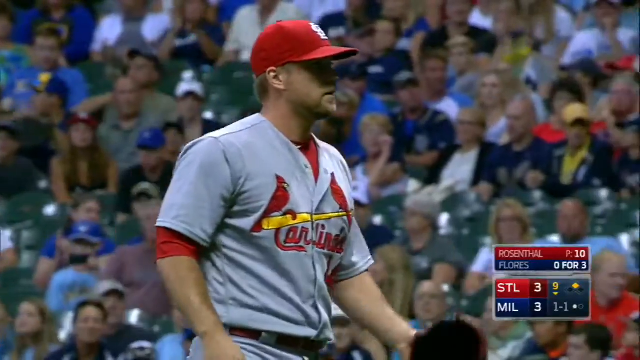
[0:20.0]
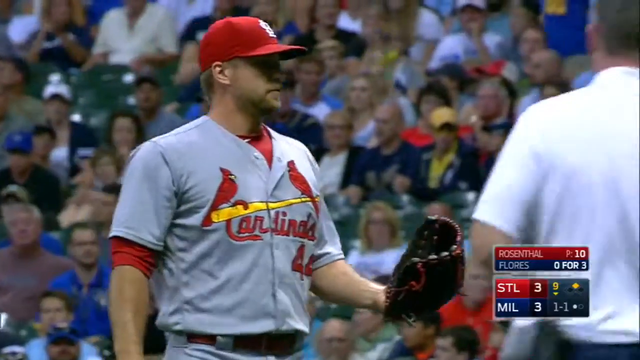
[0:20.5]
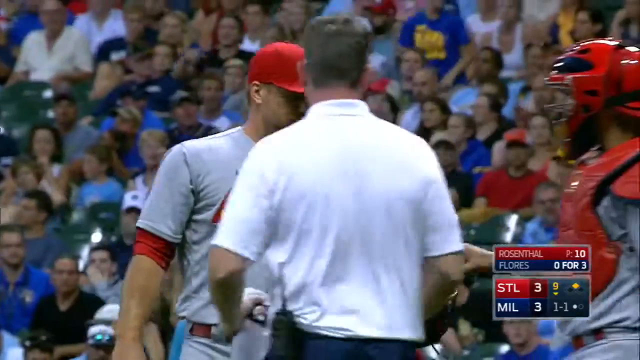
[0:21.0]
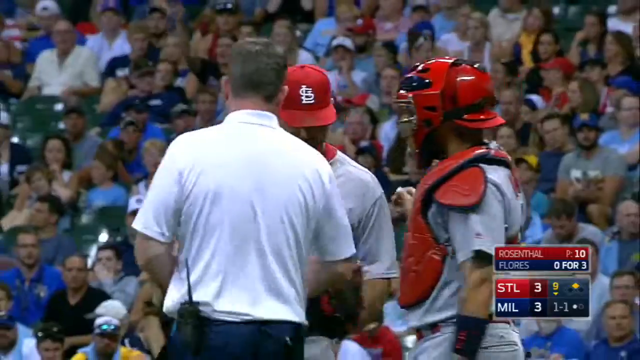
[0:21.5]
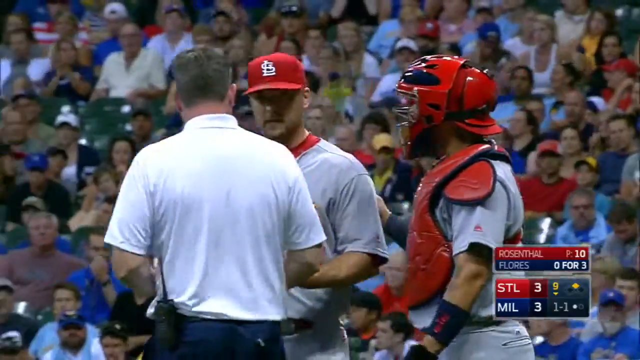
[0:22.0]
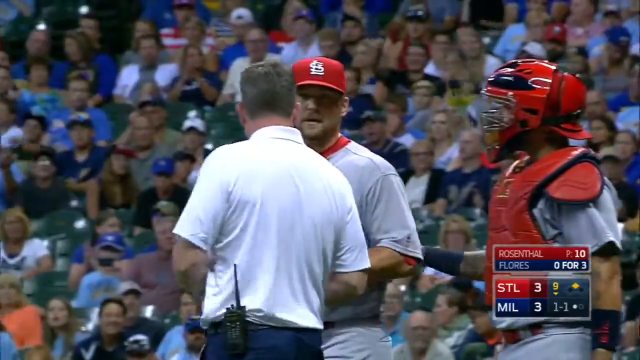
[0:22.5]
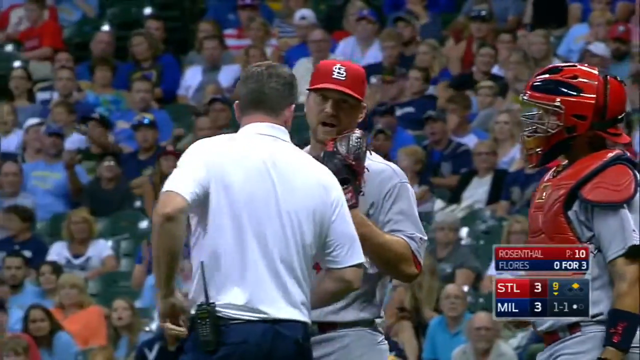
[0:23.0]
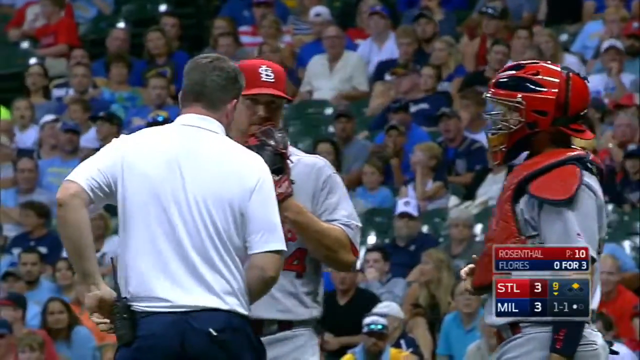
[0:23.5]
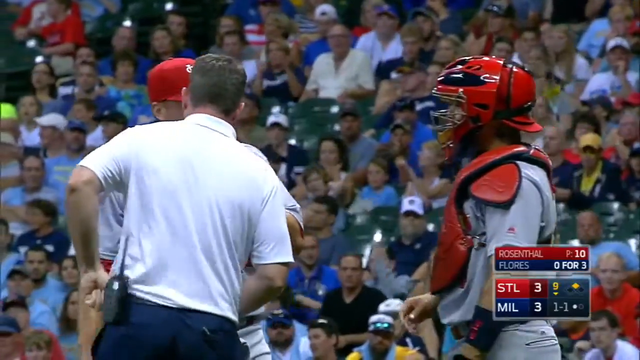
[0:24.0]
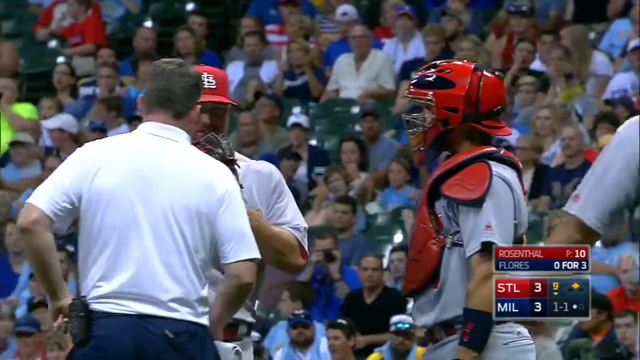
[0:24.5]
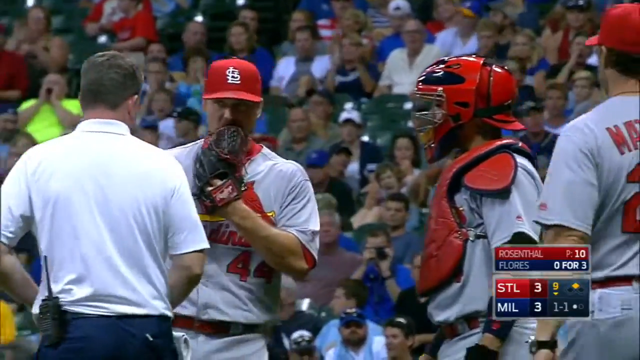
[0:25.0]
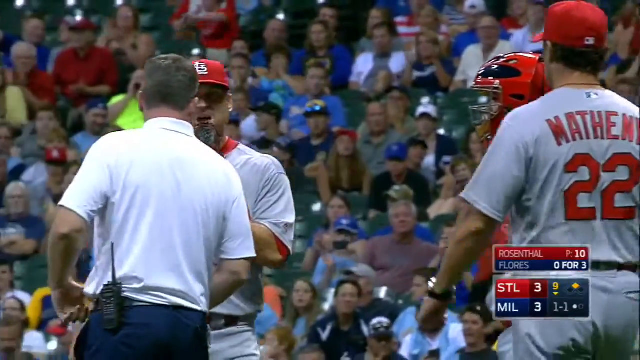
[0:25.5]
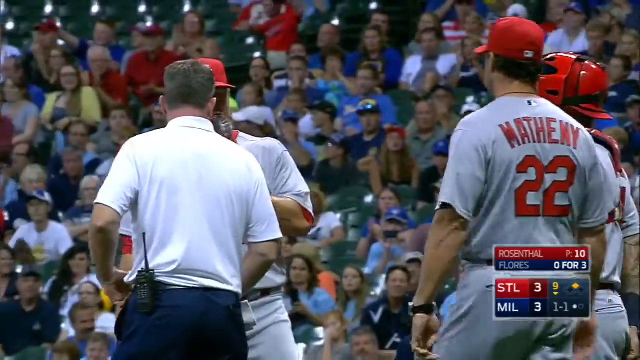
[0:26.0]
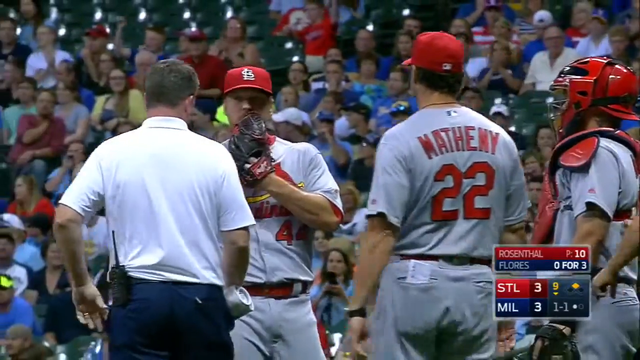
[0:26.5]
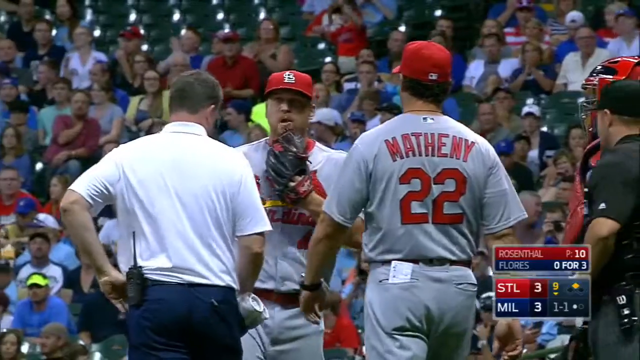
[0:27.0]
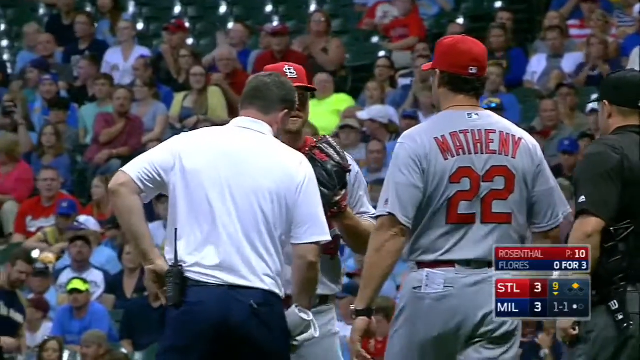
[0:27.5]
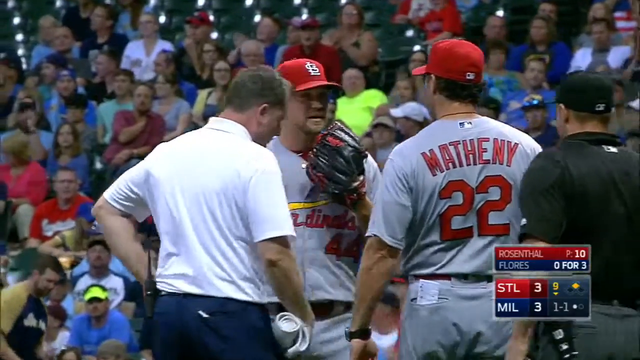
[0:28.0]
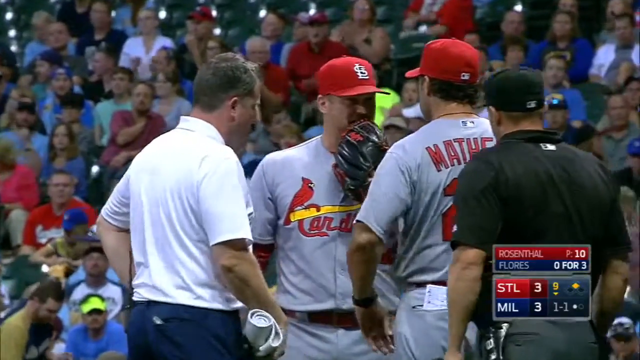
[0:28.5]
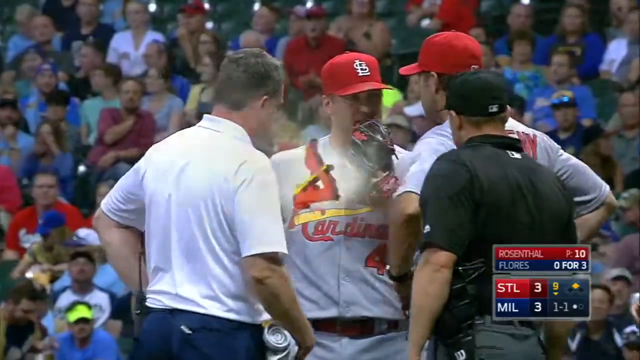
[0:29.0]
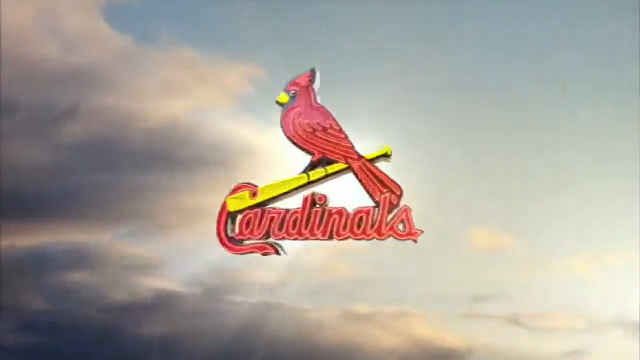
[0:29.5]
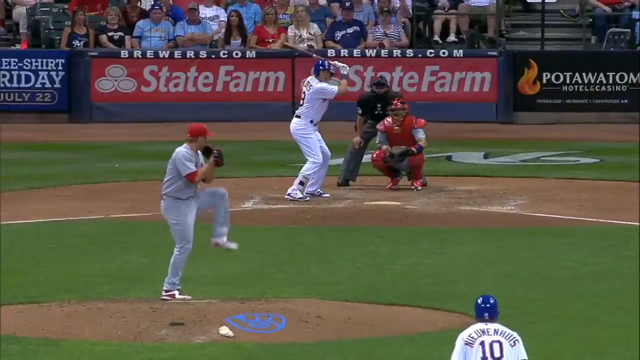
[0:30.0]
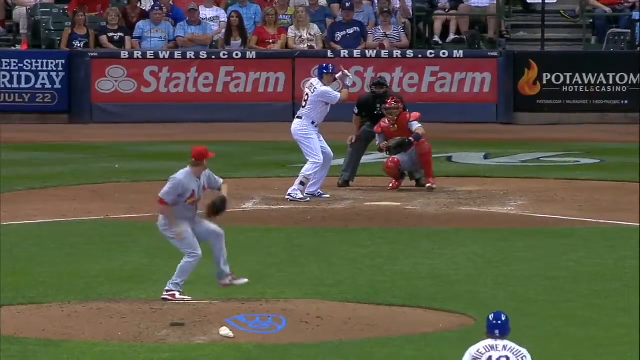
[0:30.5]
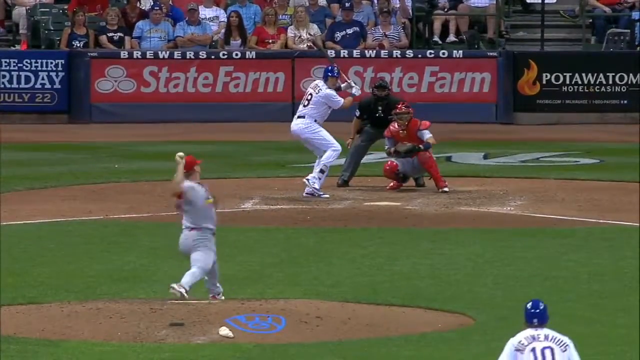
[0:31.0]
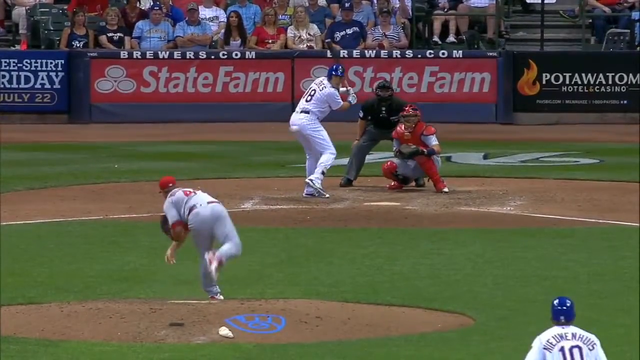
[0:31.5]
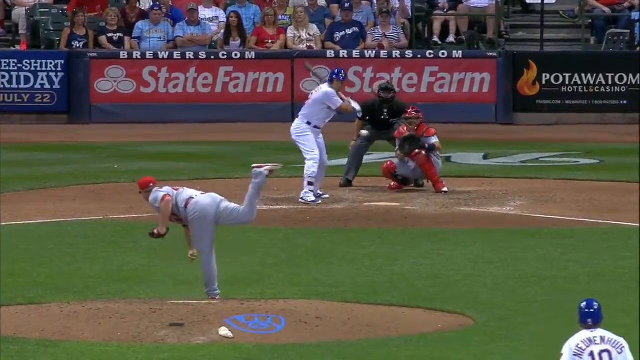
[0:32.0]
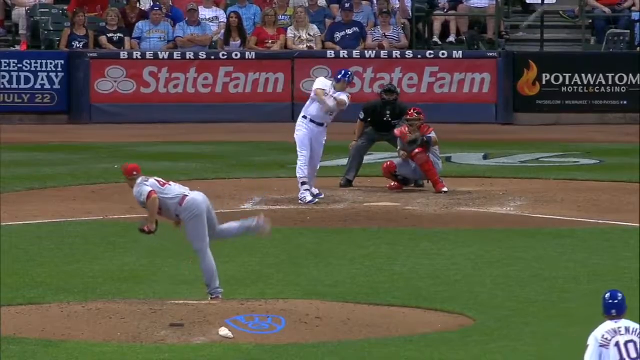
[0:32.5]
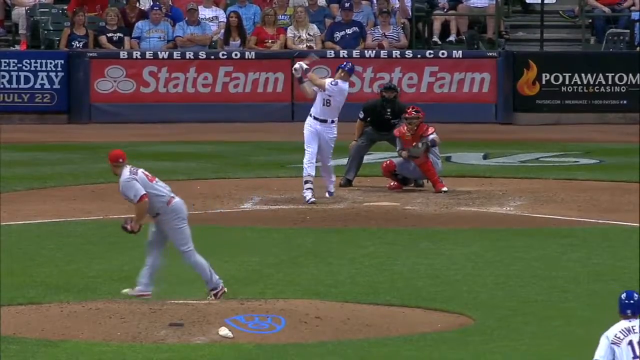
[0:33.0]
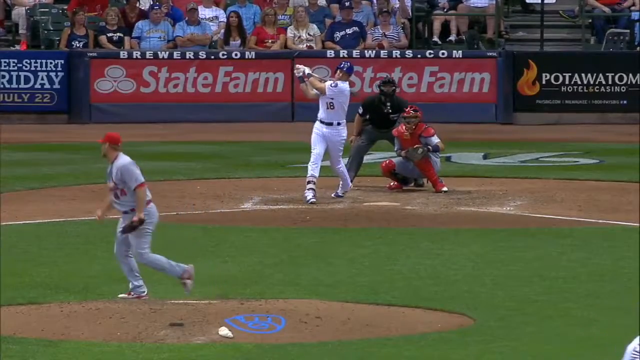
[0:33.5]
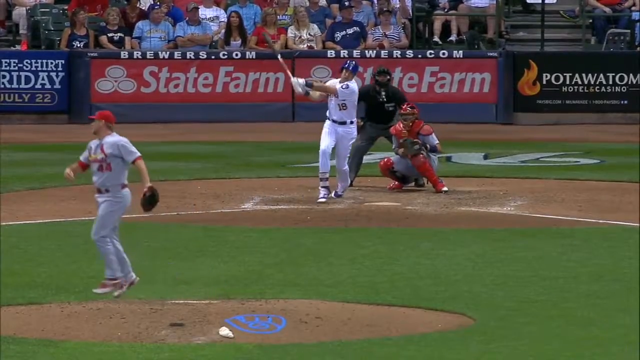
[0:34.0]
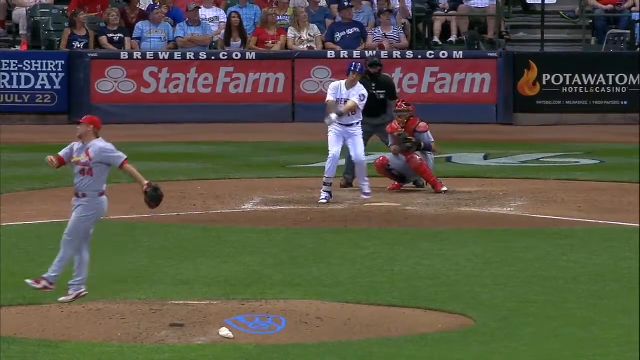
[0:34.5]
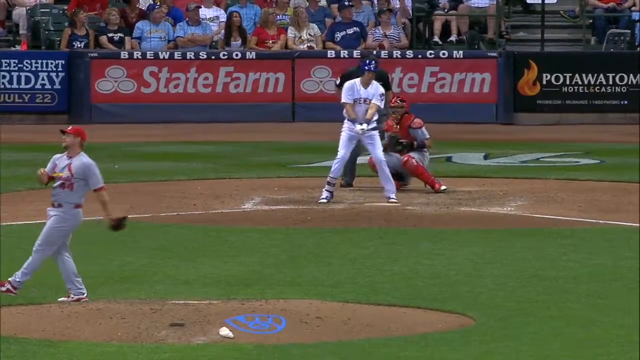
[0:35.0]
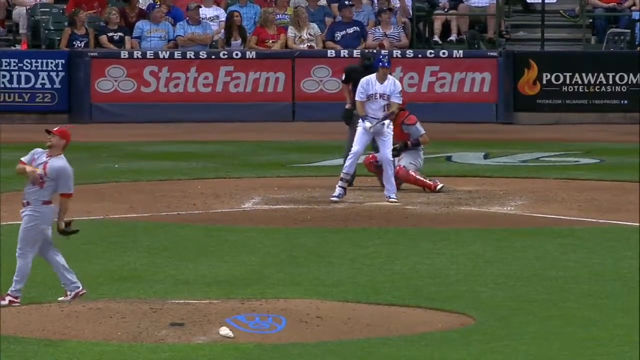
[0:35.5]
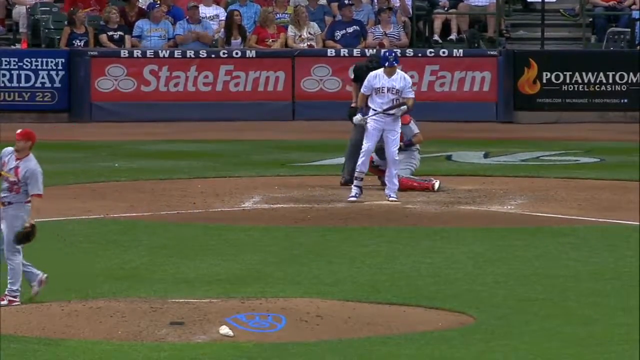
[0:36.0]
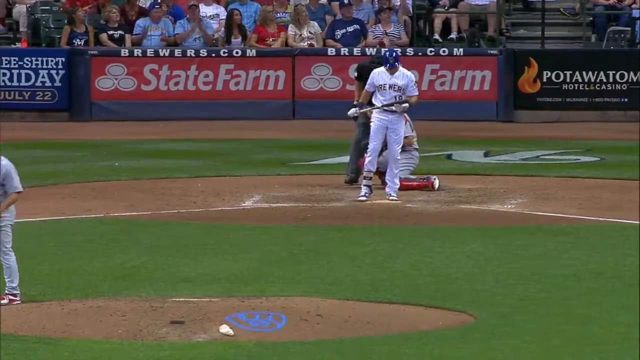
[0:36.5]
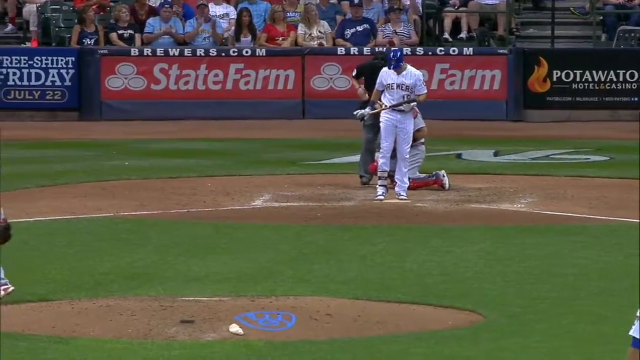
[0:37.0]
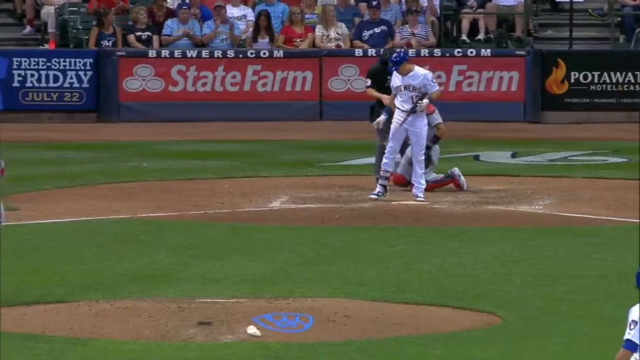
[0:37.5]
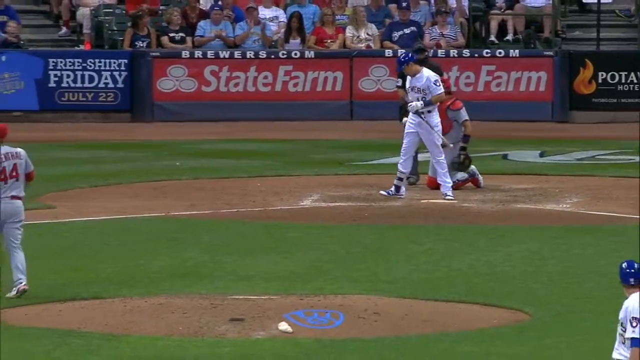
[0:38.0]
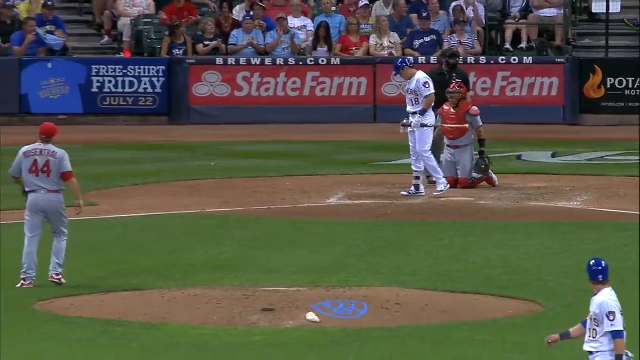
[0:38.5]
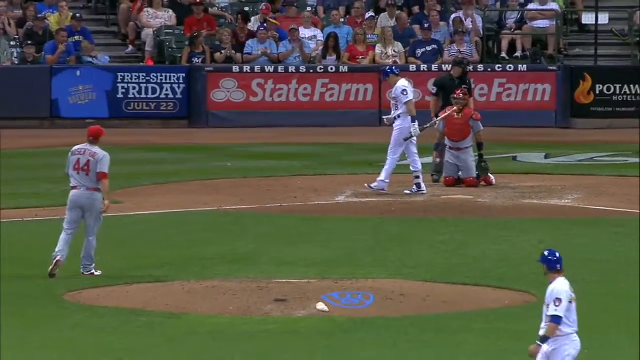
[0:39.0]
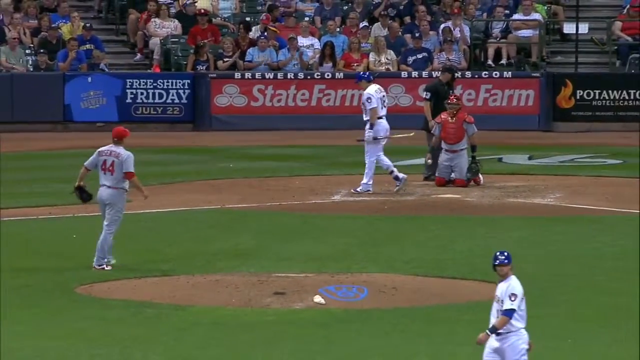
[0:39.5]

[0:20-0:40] A close-up shows a St. Louis Cardinals player, or the pitcher, in a red hat and grayish uniform with "Cardinals" in red on his shirt. In the background, much of the crowd wears blues and greens, with a little yellow and some red. The pitcher and the catcher meet with another person dressed in a white shirt. Matthew and someone else, possibly another pitcher, come out. A slow-motion pitch is shown, and the batter hits the ball off to the left. The pitcher is possibly injured. The score is still 3-3, with one ball and one strike. Another slow-motion replay of the pitch follows. "Free shirt Friday July 22nd" is on the barricades, along with a "Brewers.com" sponsor. The field has green turf with a little brown around the baseball diamond.